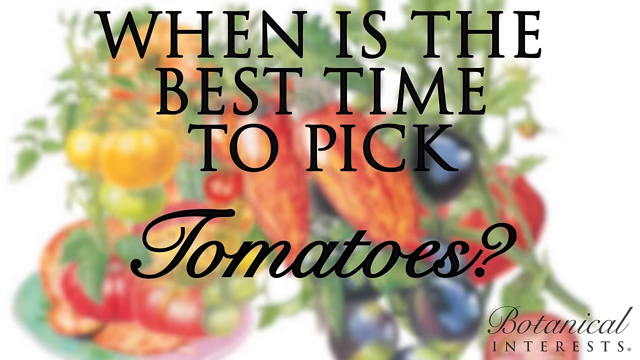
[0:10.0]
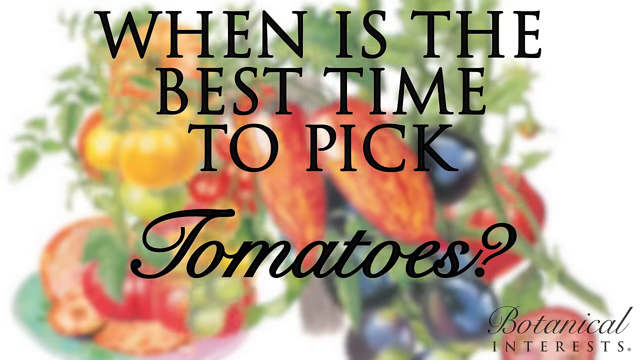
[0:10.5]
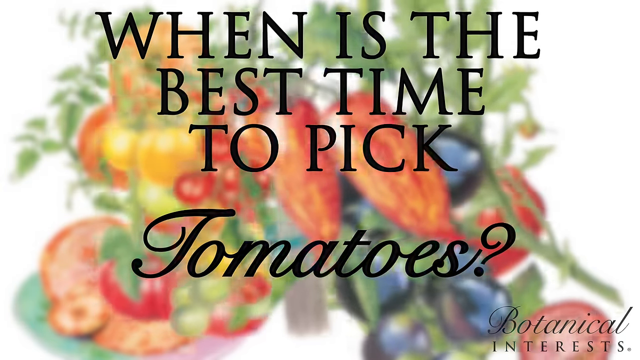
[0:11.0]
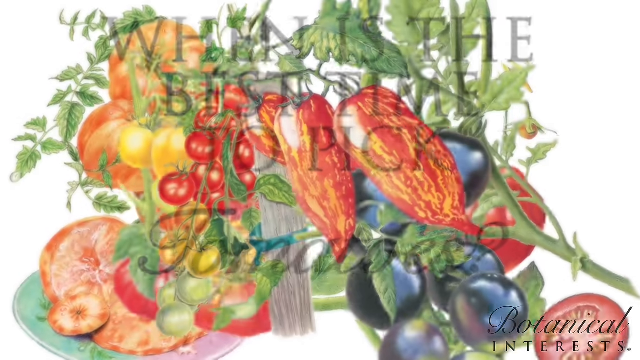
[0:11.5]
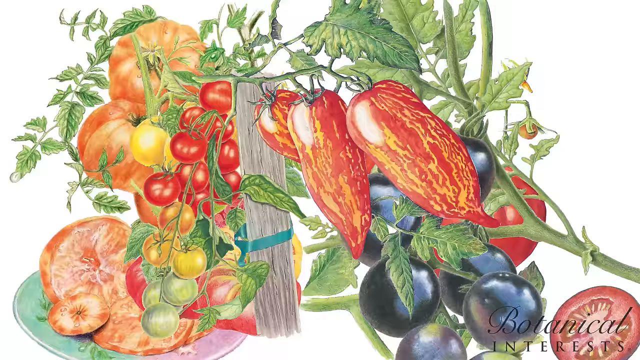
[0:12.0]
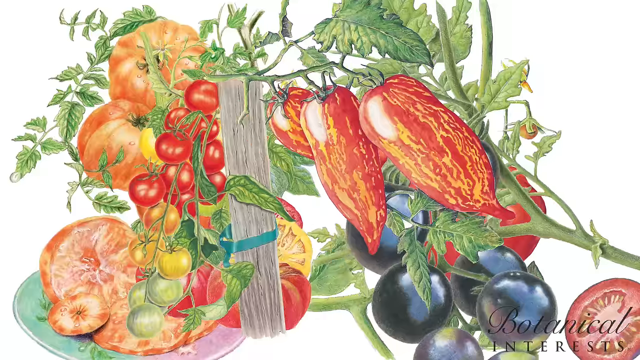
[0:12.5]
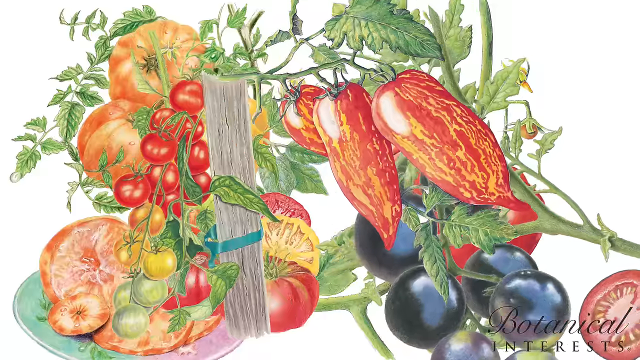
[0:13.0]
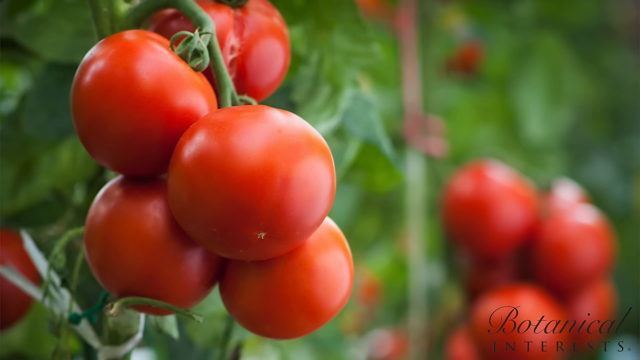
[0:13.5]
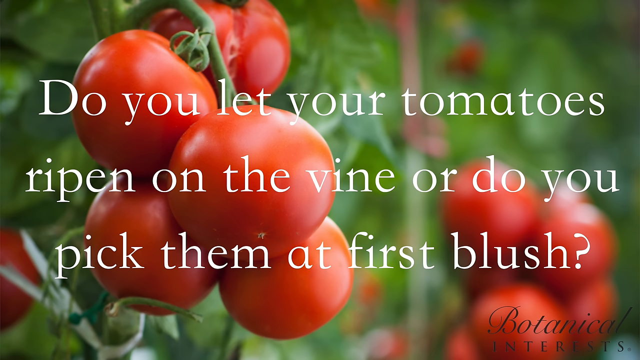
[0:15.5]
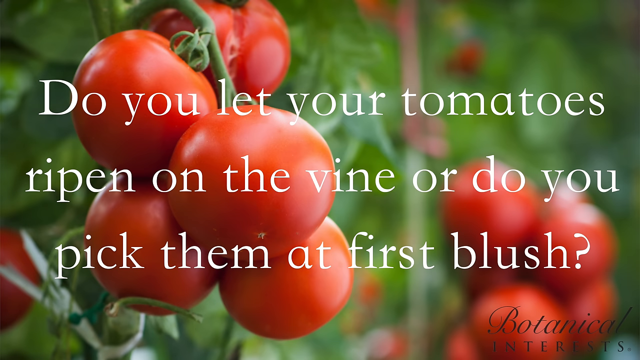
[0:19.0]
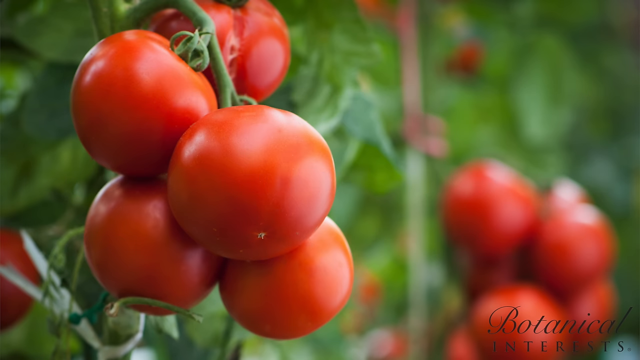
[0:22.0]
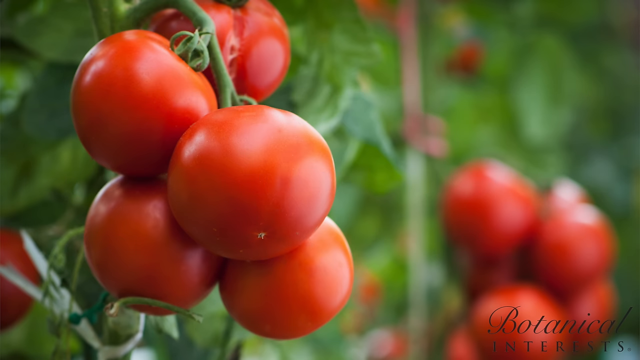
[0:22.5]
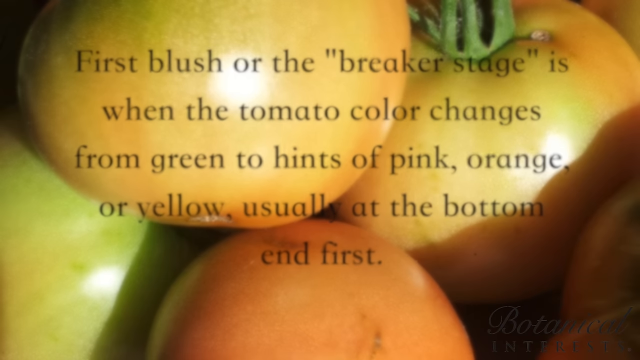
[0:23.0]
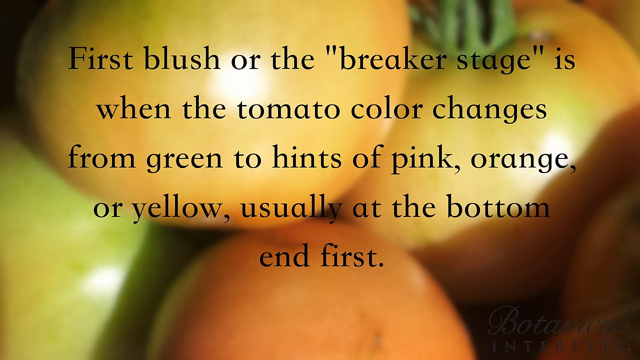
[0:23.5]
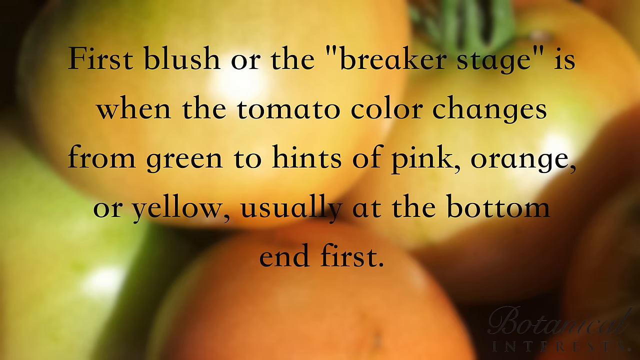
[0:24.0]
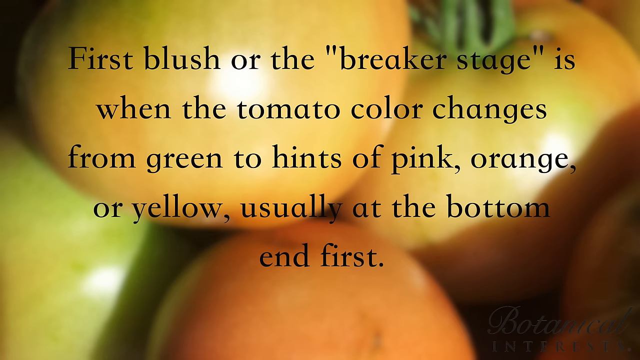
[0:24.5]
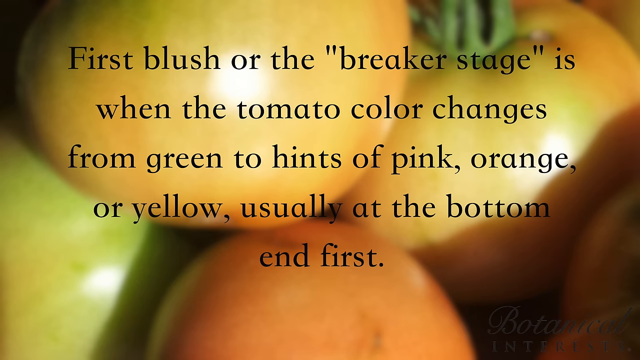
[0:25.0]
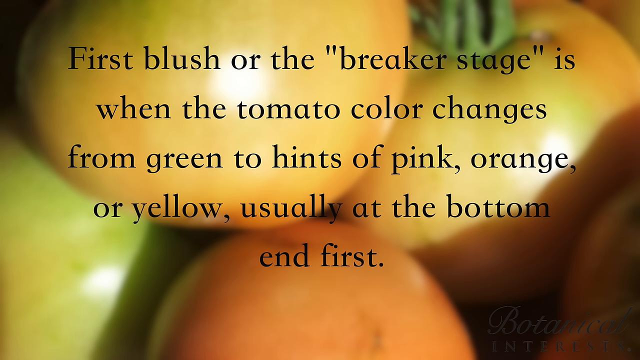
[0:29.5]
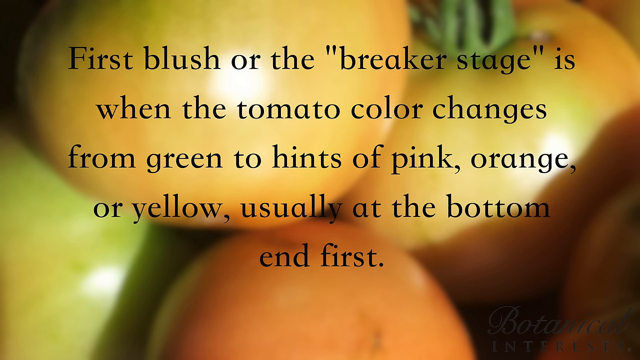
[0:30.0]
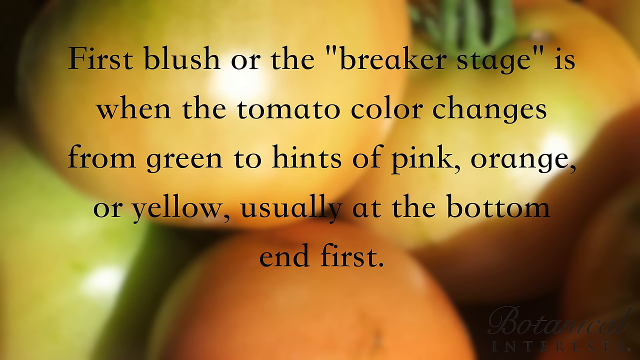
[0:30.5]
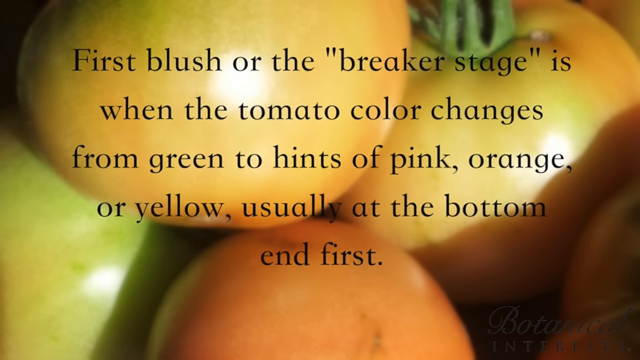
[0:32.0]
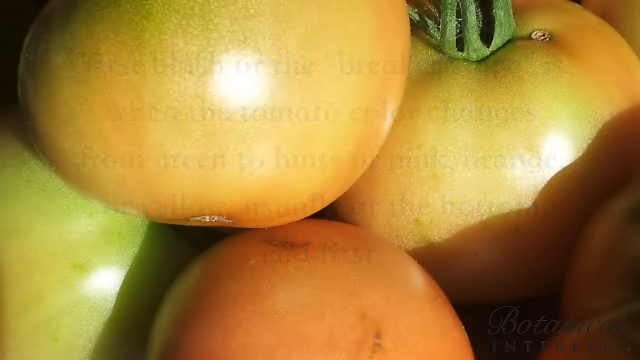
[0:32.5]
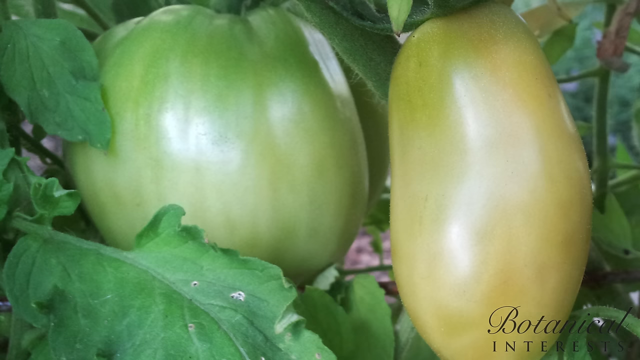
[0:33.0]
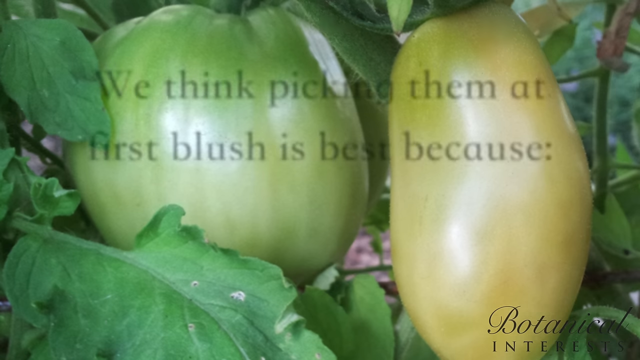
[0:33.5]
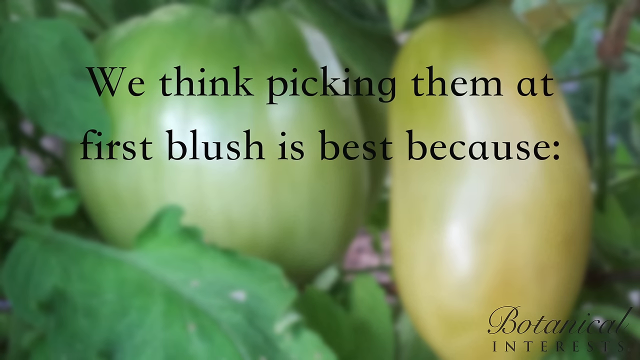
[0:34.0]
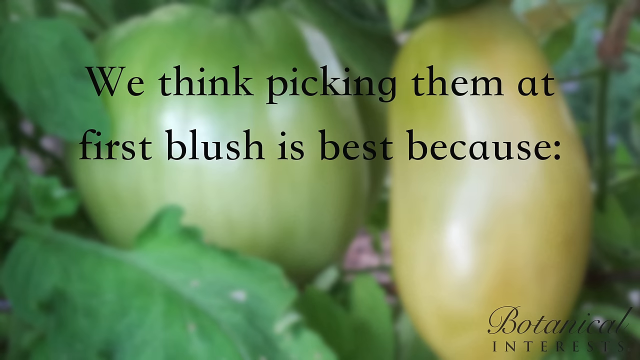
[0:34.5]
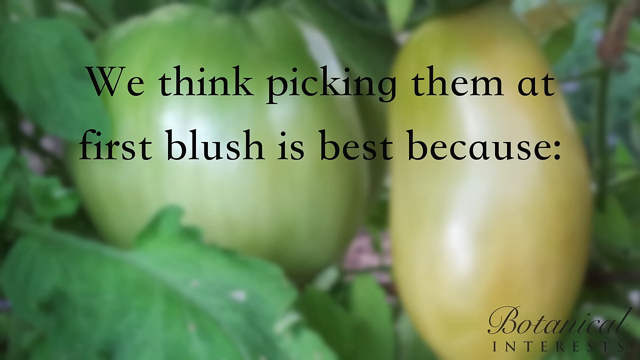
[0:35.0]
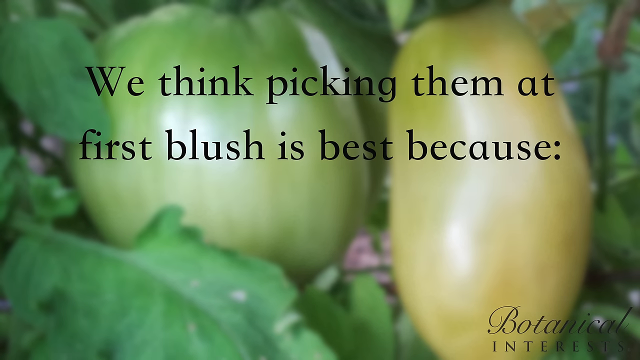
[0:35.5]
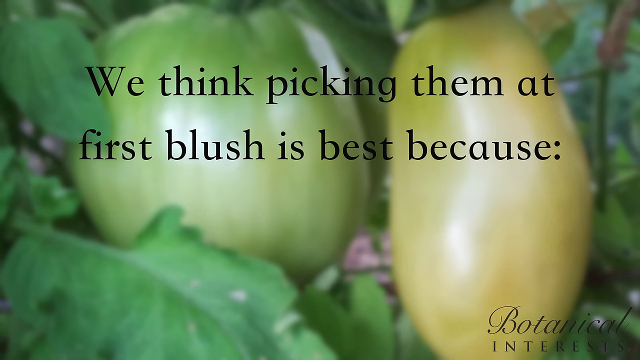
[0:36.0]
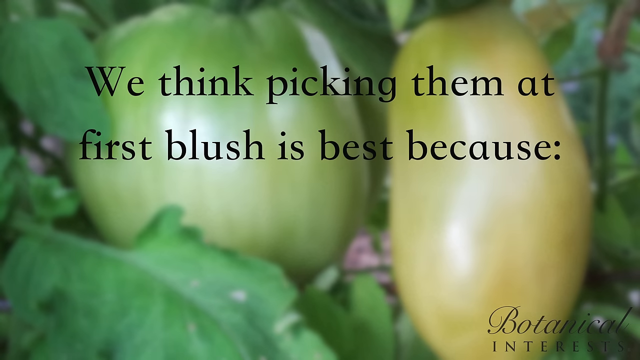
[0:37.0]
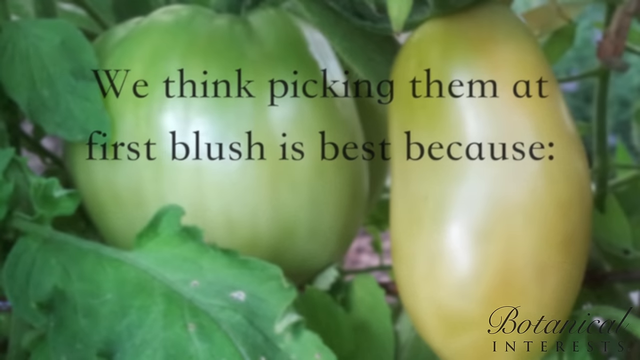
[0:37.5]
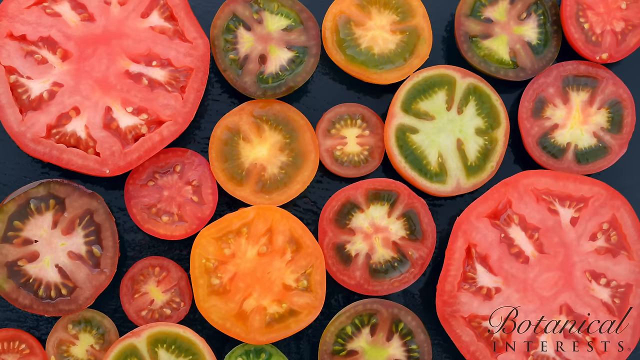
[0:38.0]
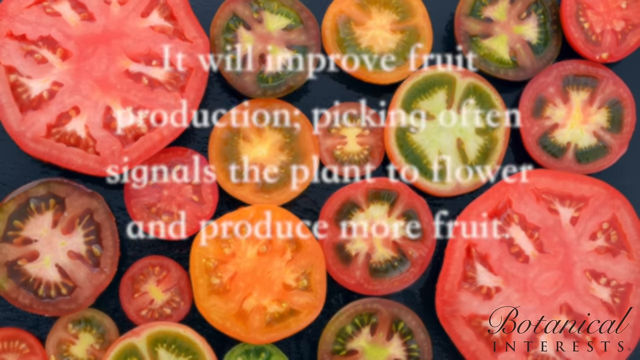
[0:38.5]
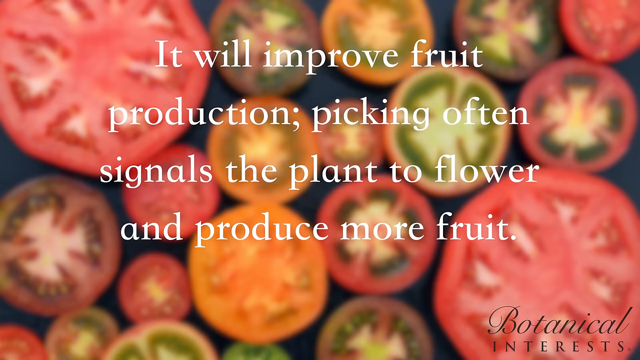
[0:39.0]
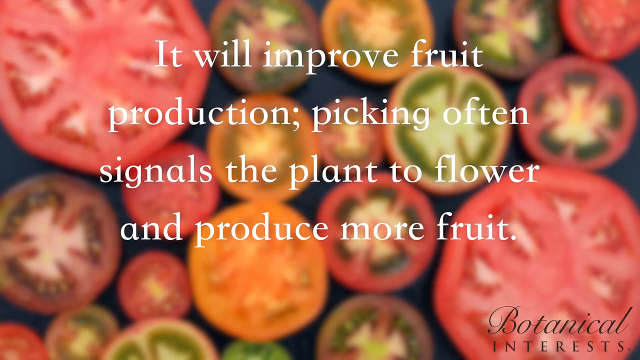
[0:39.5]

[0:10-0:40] The screen is taken up by a background of various vegetables of the kind grown in an allotment or a greenhouse. The background image is blurred, and in front of it is big black text in capital letters reading "when is the best time to pick", after which the font changes to a more handwritten style for the word "tomatoes" and a question mark. The Botanical Interests logo is at the bottom. The screen then changes to a picture of plump tomatoes with slightly blurred greenery in the background. White text appears across the entire screen reading "do you let your tomatoes ripen on the vine or do you pick them at first blush?" The screen changes again to an image of tomatoes that have just started turning red, so they are slightly green and slightly orange. Black text fills this screen, reading "first blush or the breaker stage is when the tomato colour changes from green to hints of pink, orange or yellow, usually at the bottom end first."